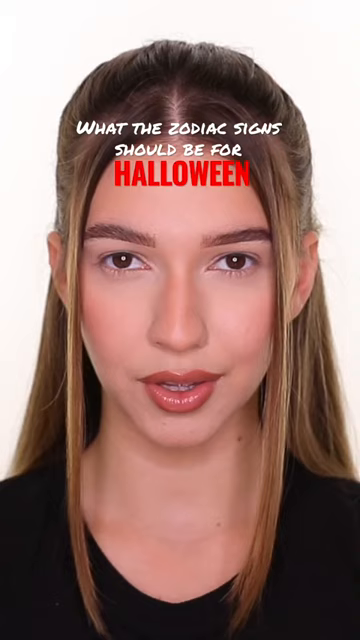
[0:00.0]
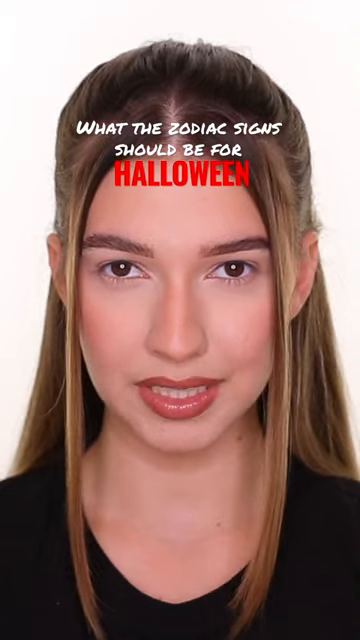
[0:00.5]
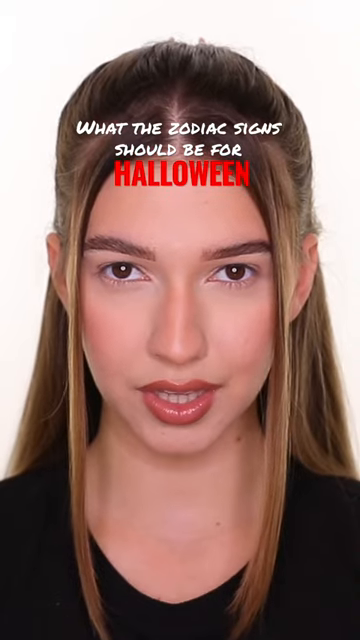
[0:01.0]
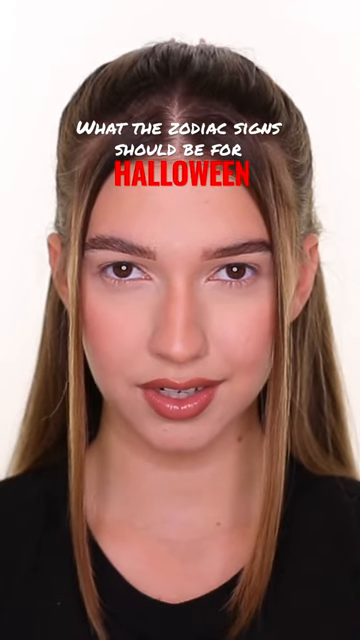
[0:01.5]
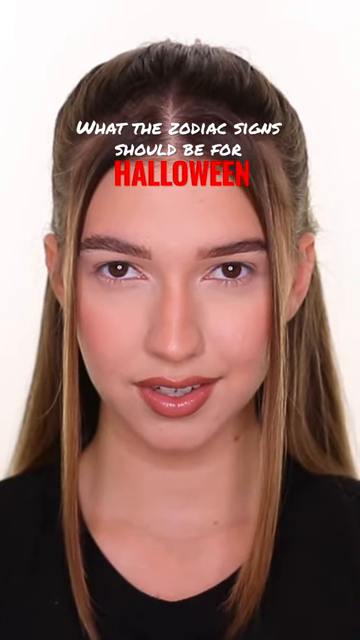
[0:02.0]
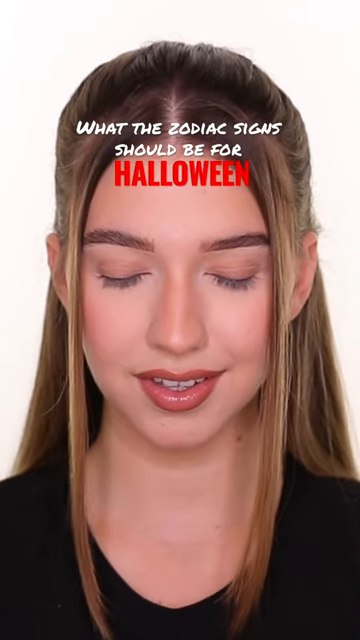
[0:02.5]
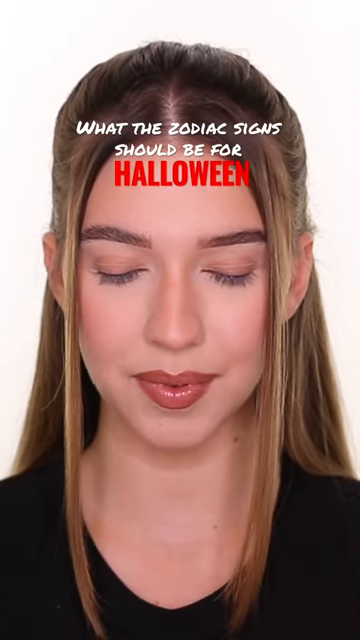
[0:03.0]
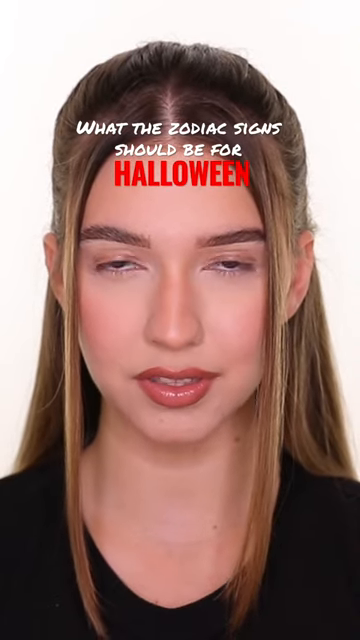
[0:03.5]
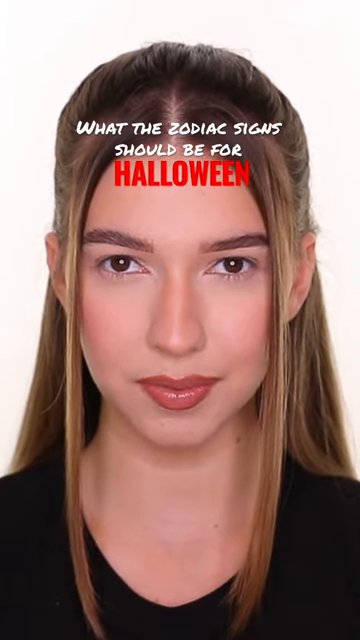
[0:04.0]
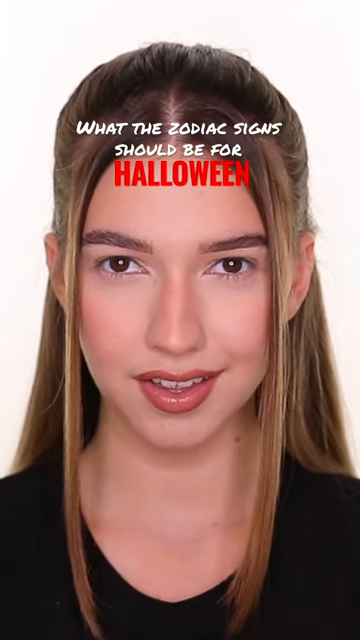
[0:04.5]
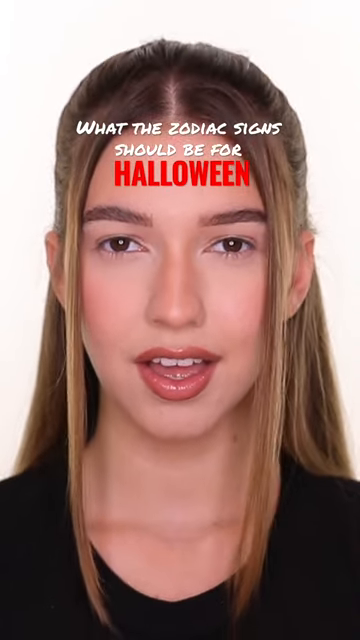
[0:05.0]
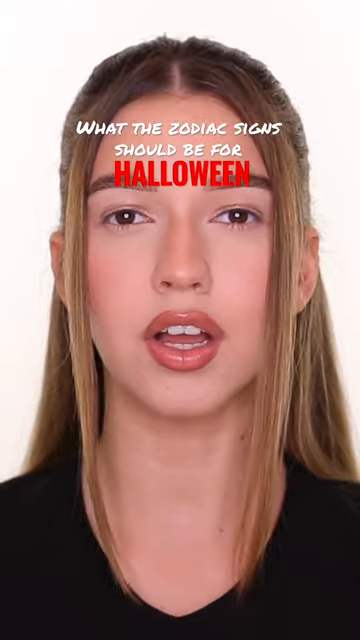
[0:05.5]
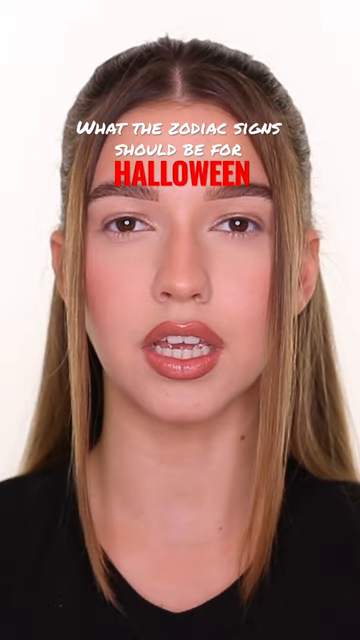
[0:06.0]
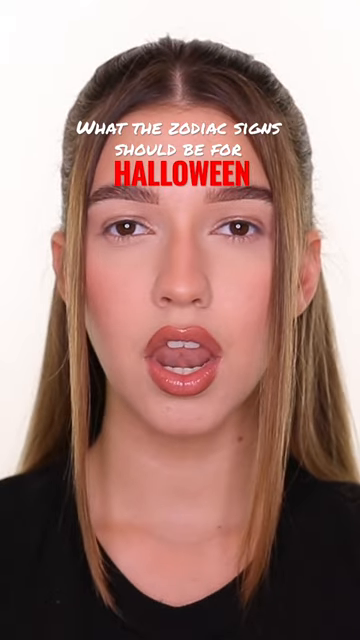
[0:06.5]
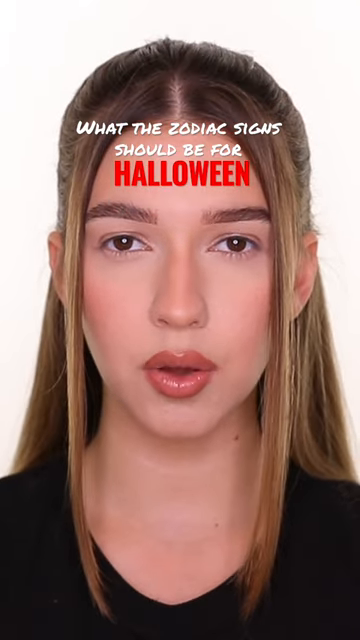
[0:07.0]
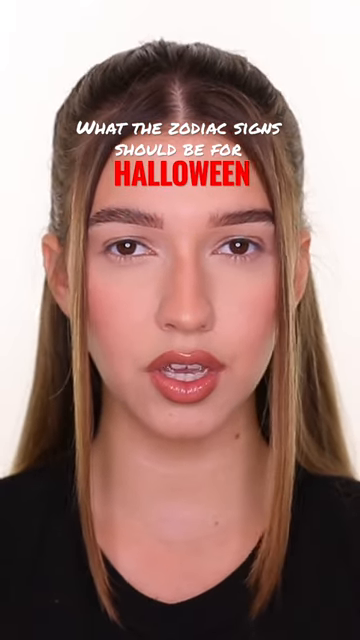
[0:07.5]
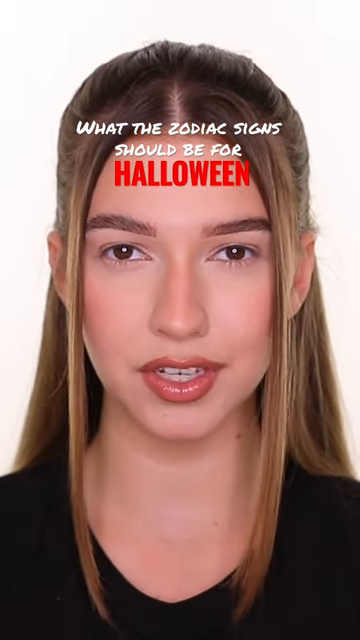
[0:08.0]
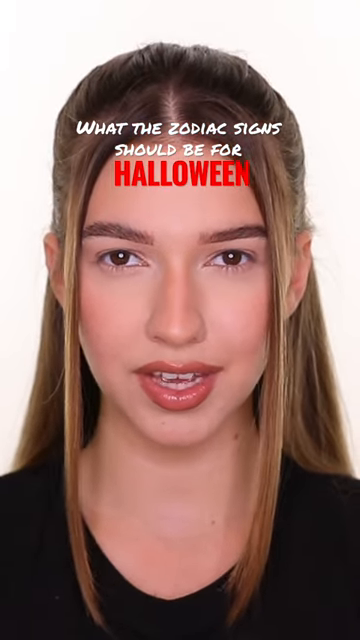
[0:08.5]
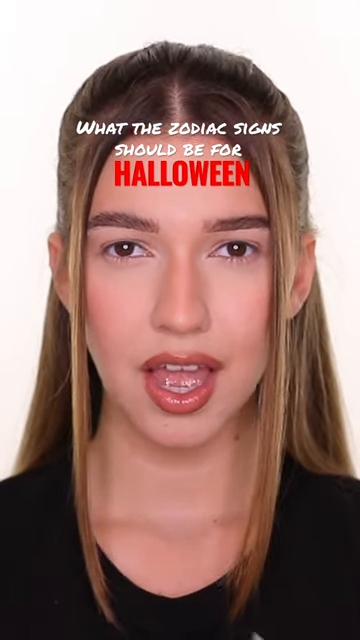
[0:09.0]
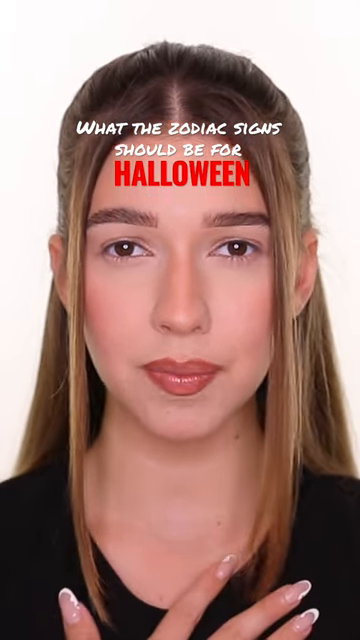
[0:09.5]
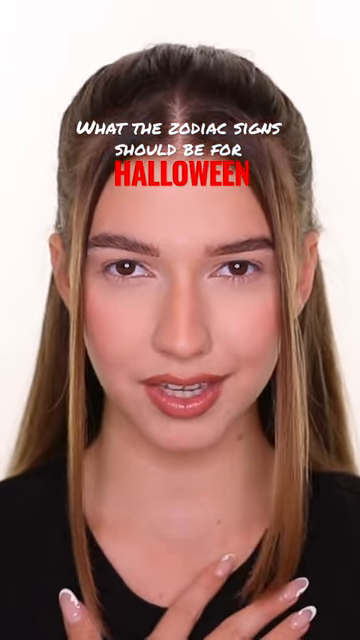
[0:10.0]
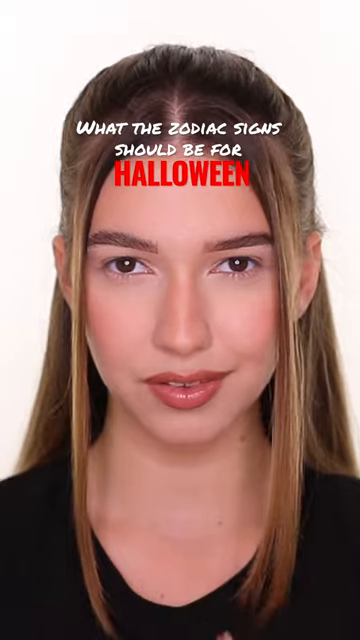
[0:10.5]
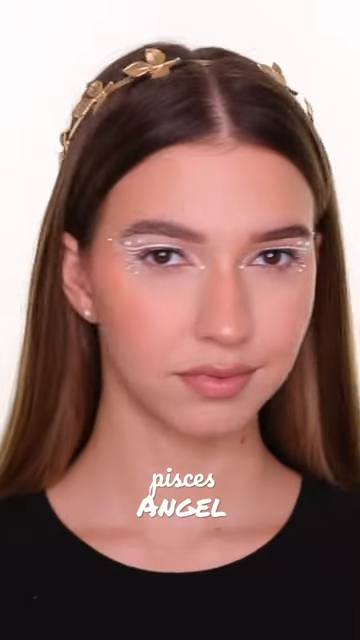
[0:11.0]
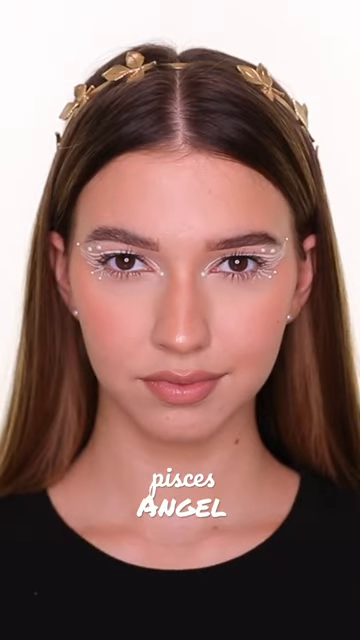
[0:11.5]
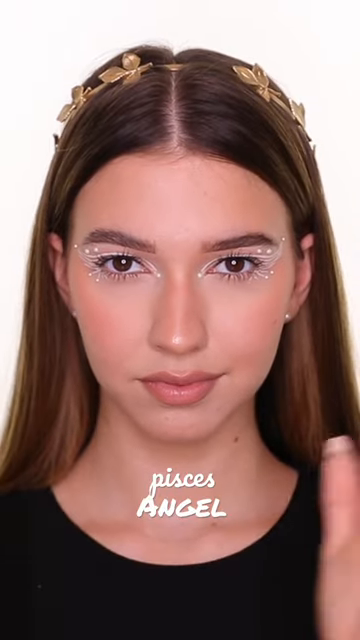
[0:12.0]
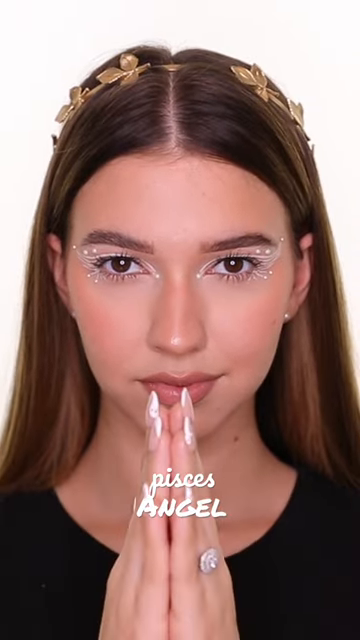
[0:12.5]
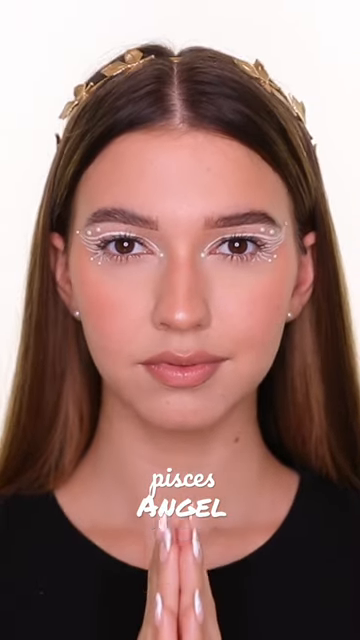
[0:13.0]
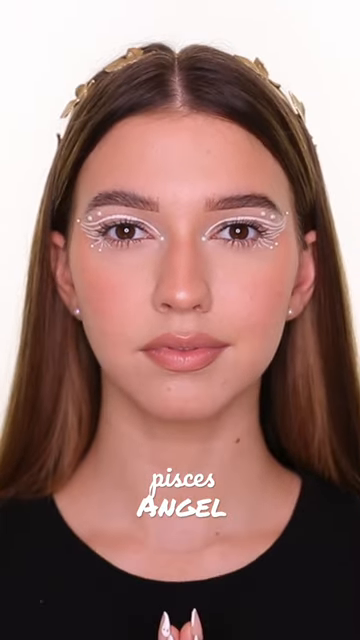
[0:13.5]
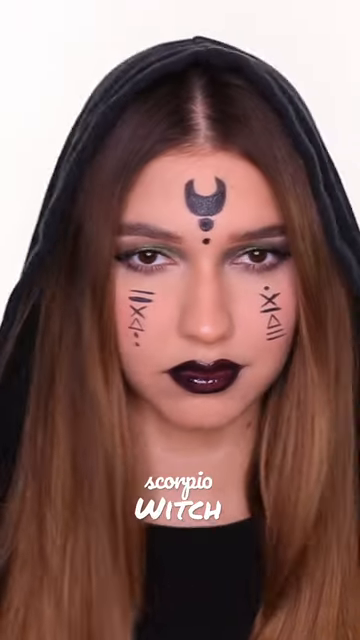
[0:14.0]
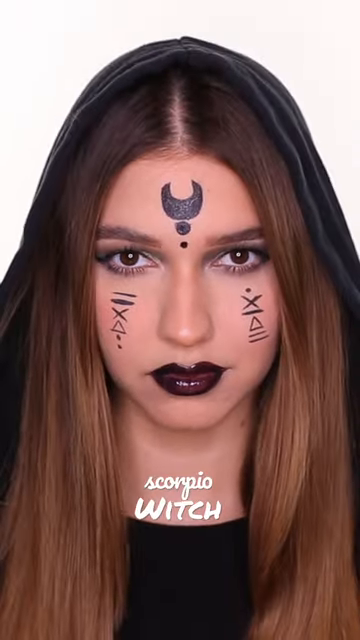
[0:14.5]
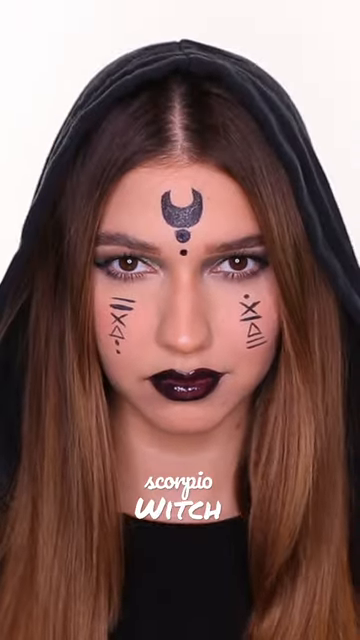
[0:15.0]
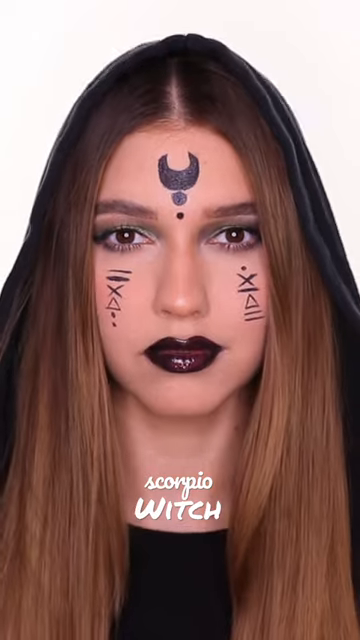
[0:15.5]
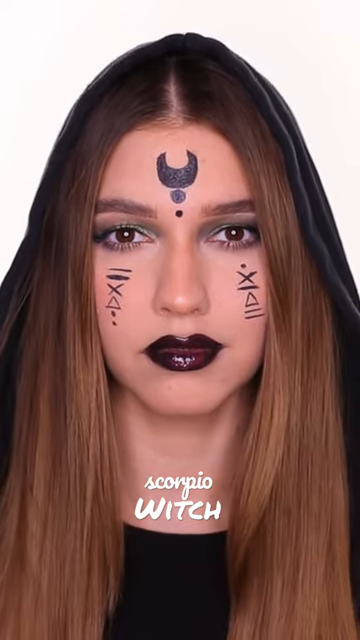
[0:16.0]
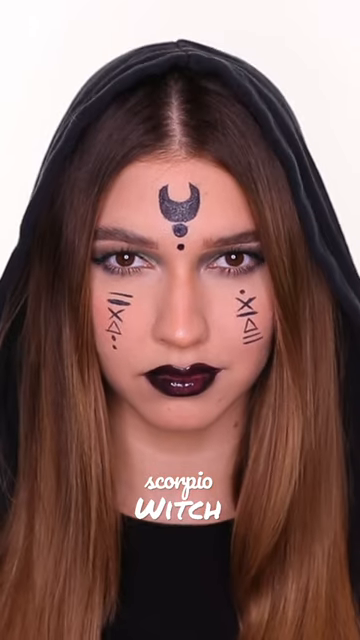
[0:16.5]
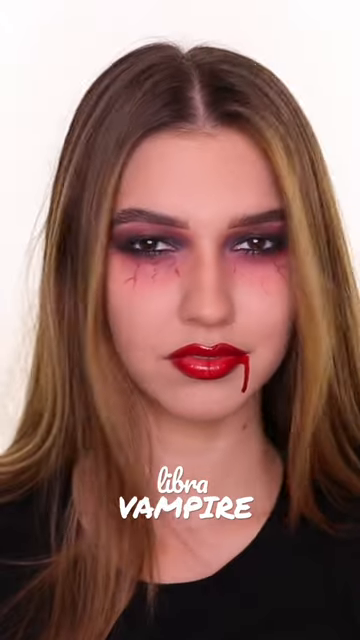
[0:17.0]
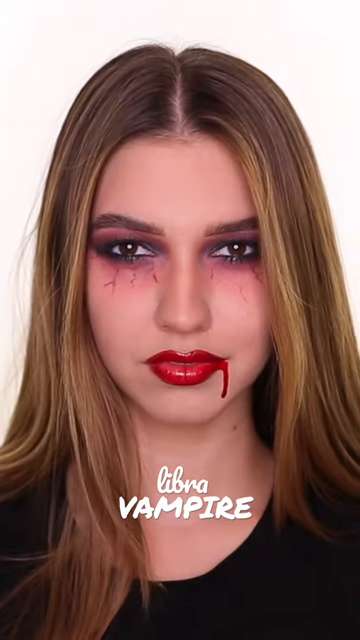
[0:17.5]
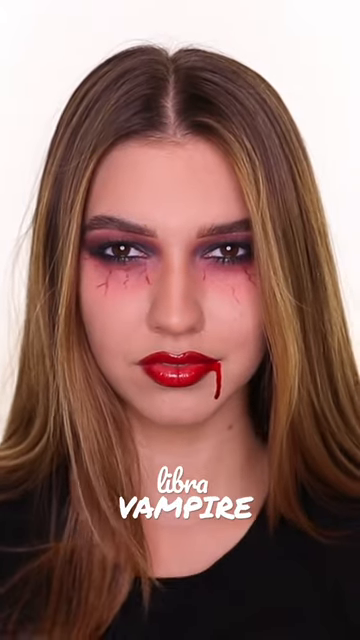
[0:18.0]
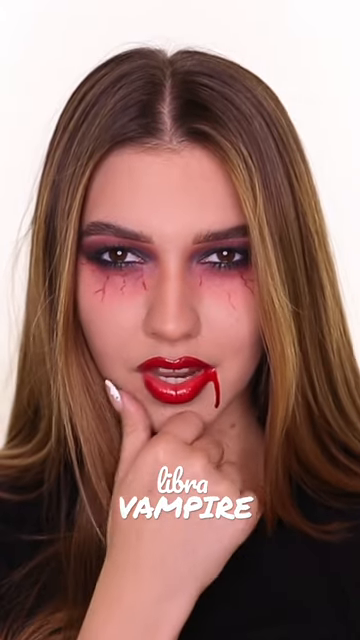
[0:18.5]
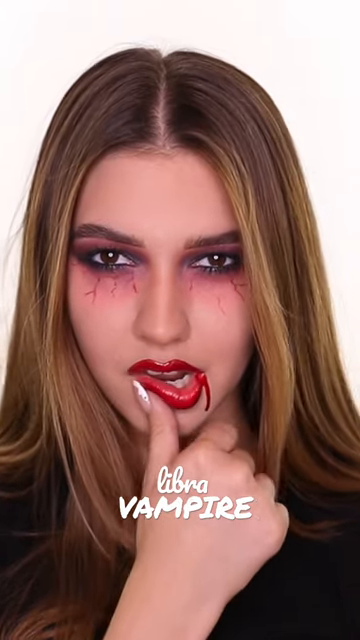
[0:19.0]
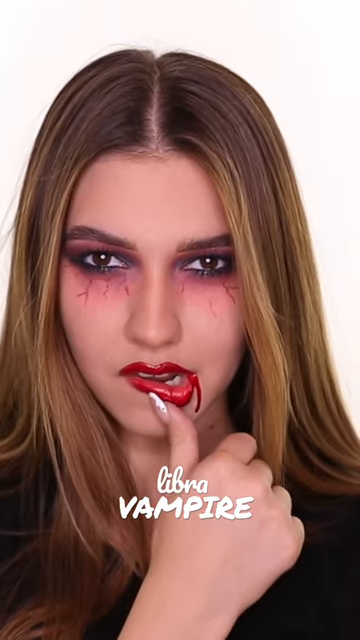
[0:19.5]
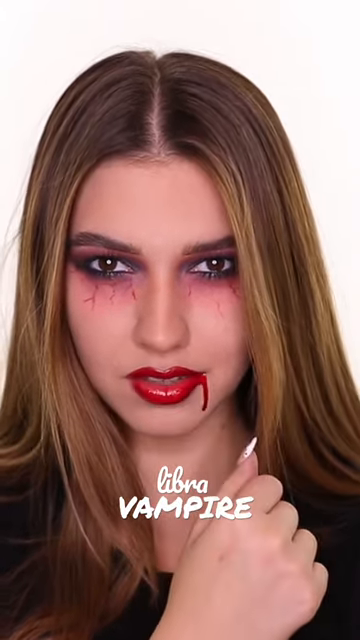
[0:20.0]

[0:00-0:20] A woman is speaking, and on-screen text reads "what the Zodiac sign should be for Halloween." She then appears with a different hairstyle, and she says "Pisces angel"; in this look she has what seem to be silver feathers adorning the sides of her eyes and a small crown of leaves on her hair, apparently looking angelic. Next she wears makeup with symbols, something like a horn above her head, and more dark makeup, and the text reads "Scorpio witch"; she is apparently dressed as a witch. She has long dark brown or light brown hair. In the following look she has what seem to be highlights in her hair, something like blood or veins running down from her eyes, deep eyes, red lipstick and a little blood on the side of her lips. The text reads "Libra vampire," so she is made up as a vampire, and she sort of rubs her lip. The witch look seems darker and more menacing than the vampire, which looks bloodthirsty. She appears to be going through different Halloween makeup styles based on Zodiac signs.